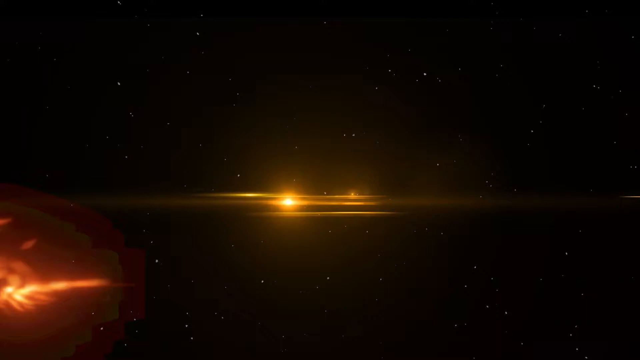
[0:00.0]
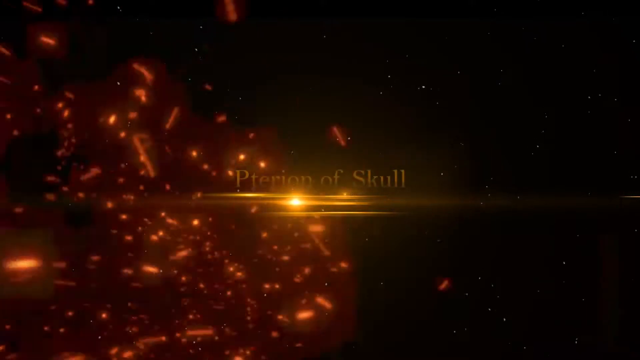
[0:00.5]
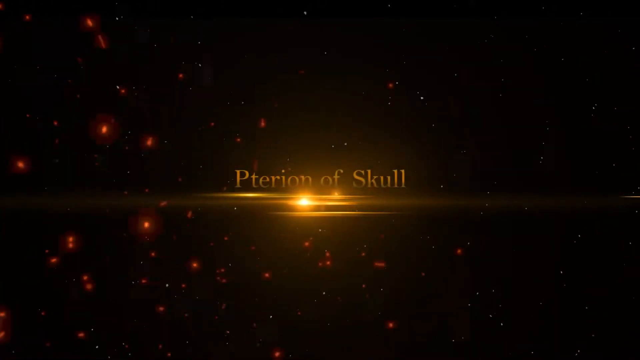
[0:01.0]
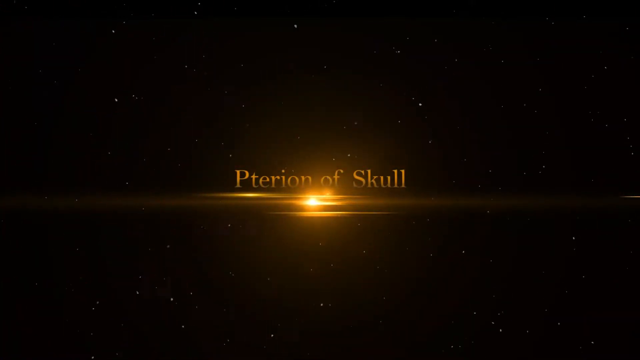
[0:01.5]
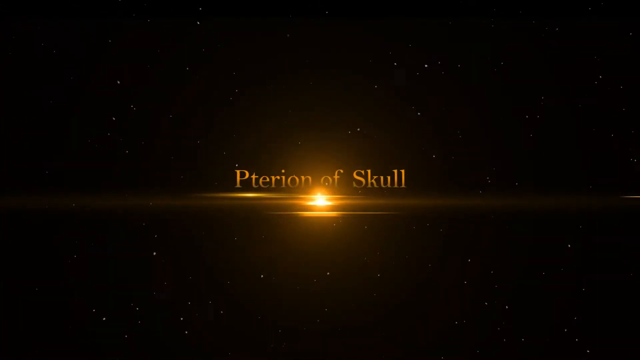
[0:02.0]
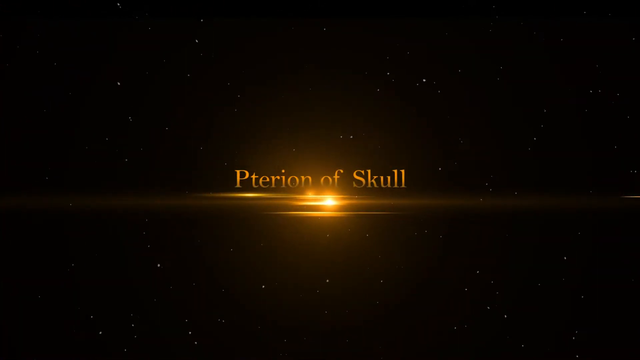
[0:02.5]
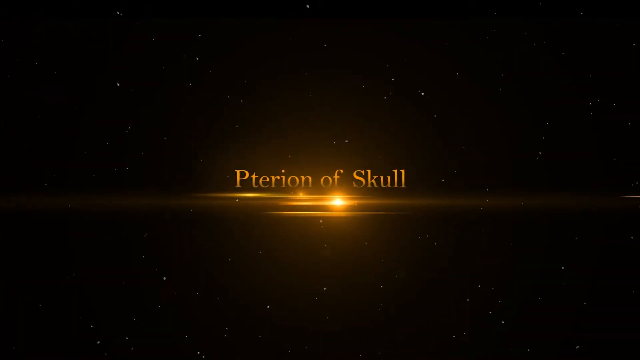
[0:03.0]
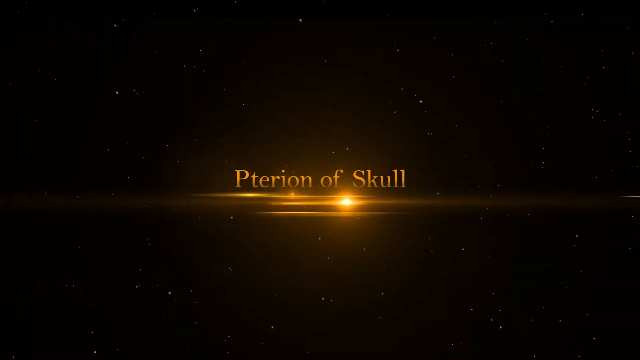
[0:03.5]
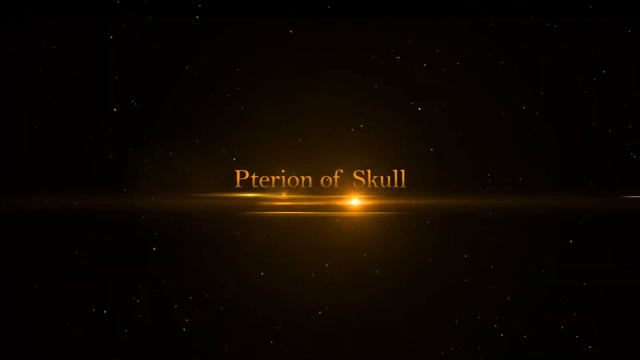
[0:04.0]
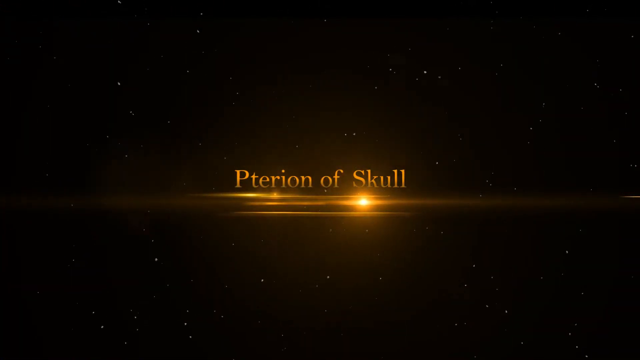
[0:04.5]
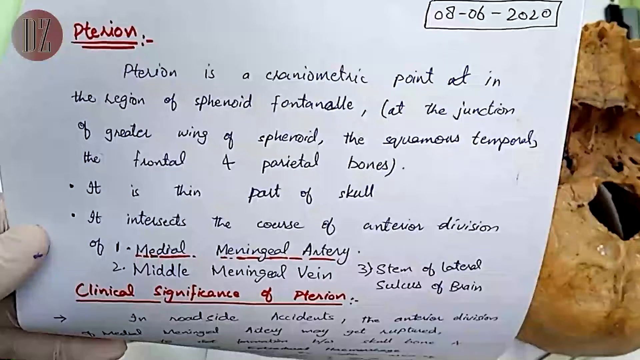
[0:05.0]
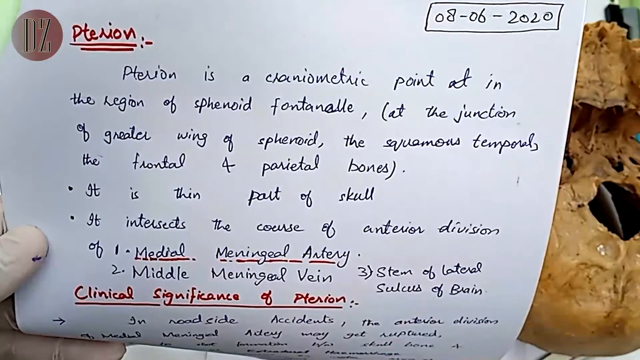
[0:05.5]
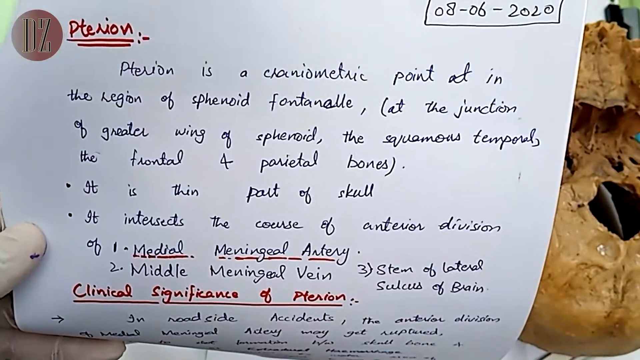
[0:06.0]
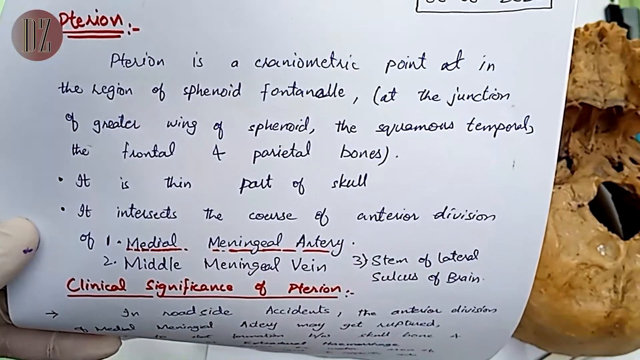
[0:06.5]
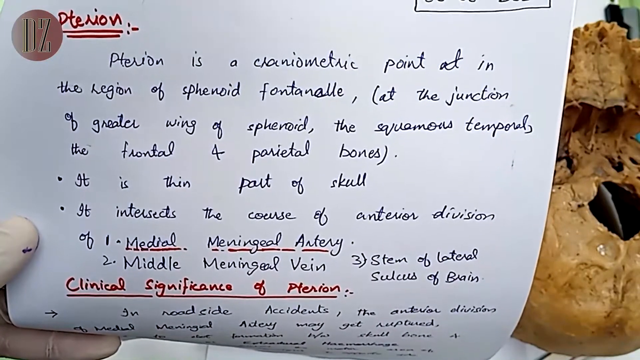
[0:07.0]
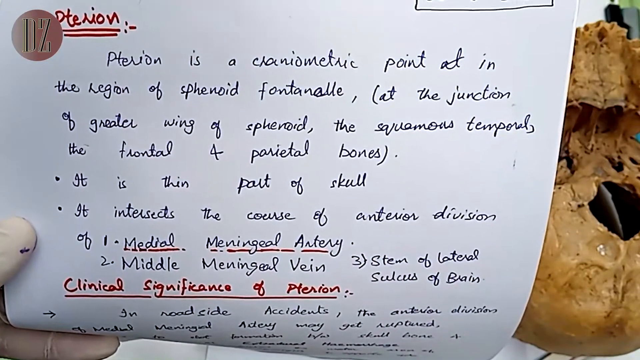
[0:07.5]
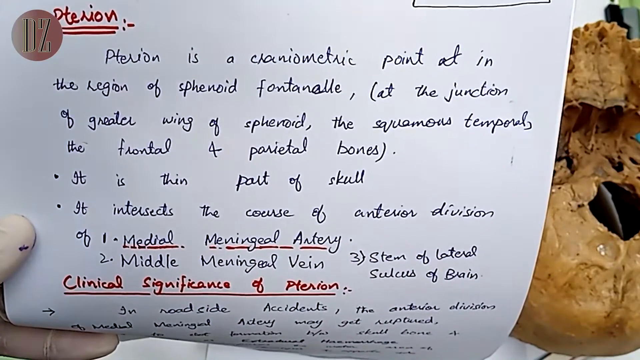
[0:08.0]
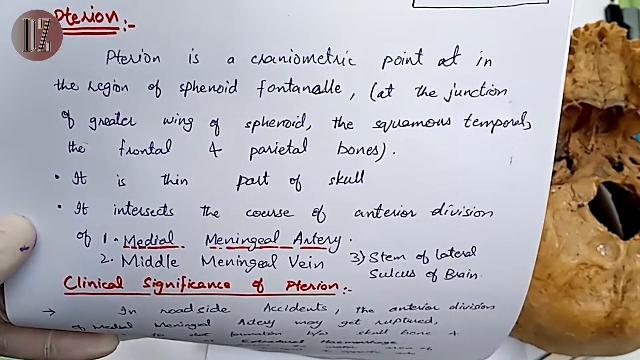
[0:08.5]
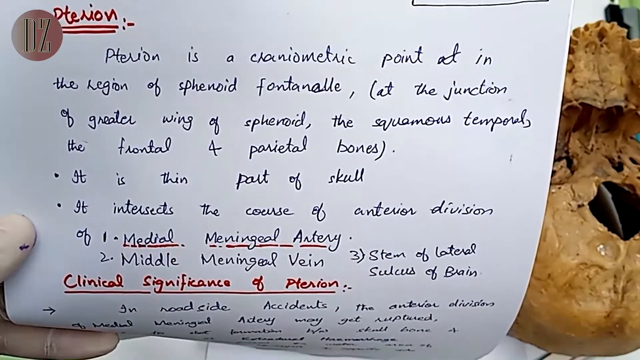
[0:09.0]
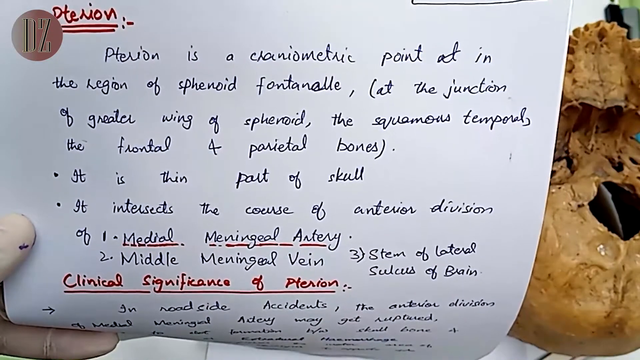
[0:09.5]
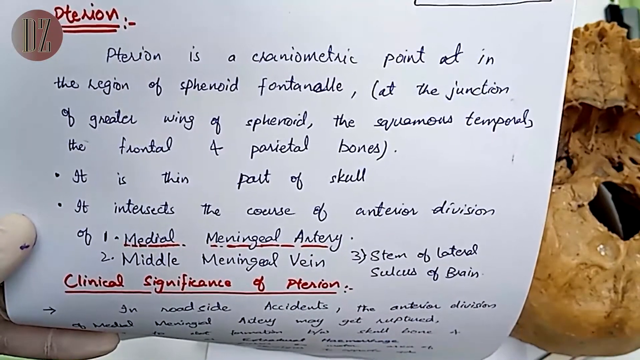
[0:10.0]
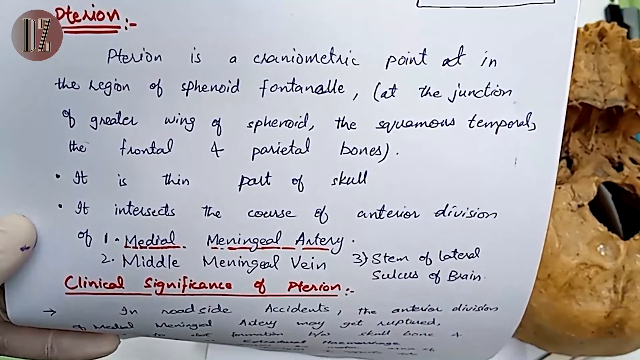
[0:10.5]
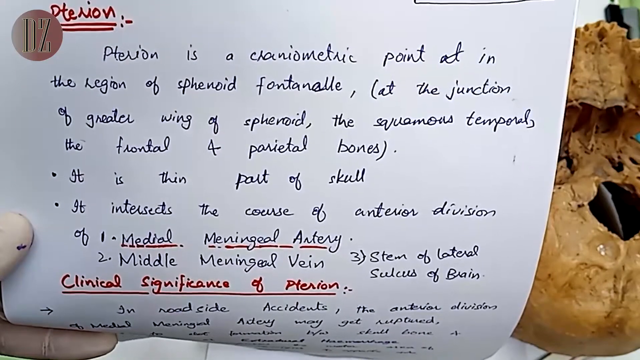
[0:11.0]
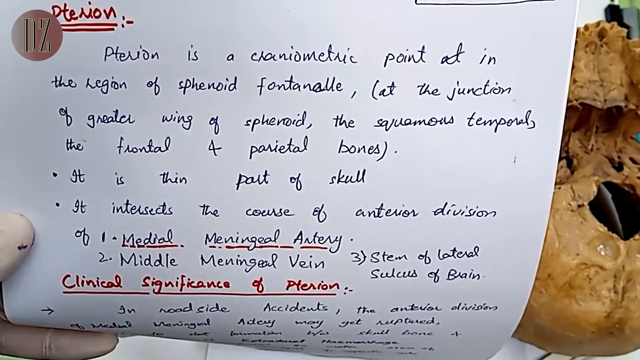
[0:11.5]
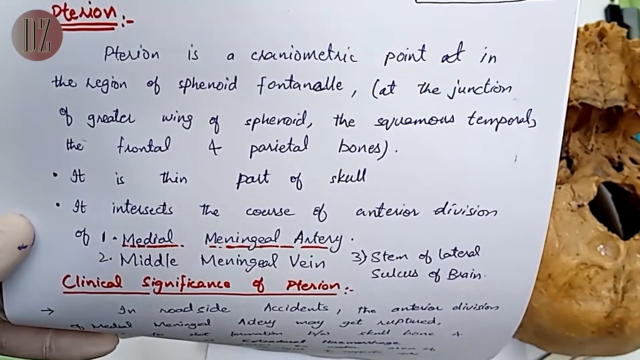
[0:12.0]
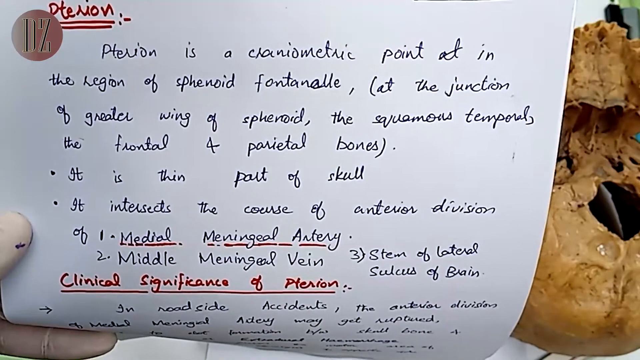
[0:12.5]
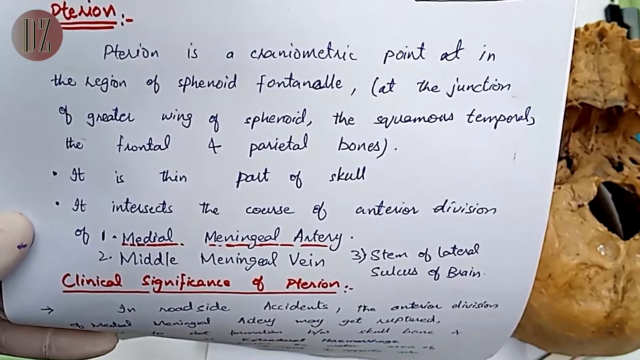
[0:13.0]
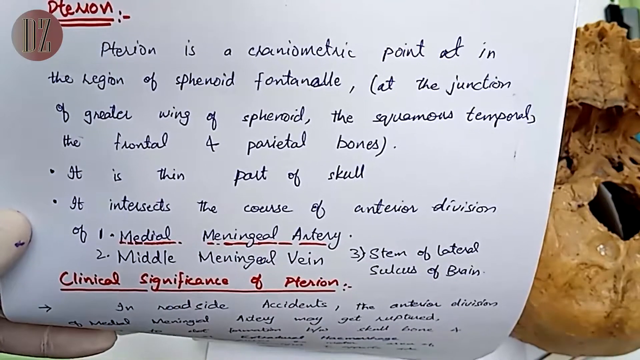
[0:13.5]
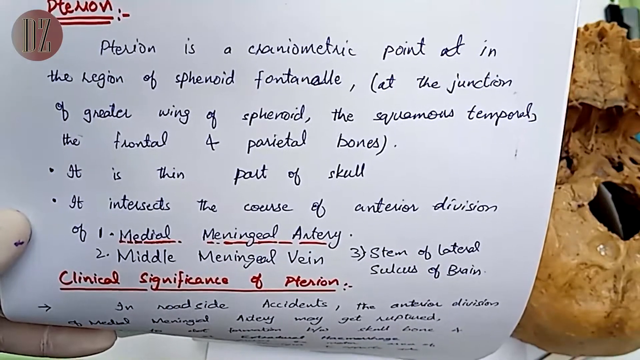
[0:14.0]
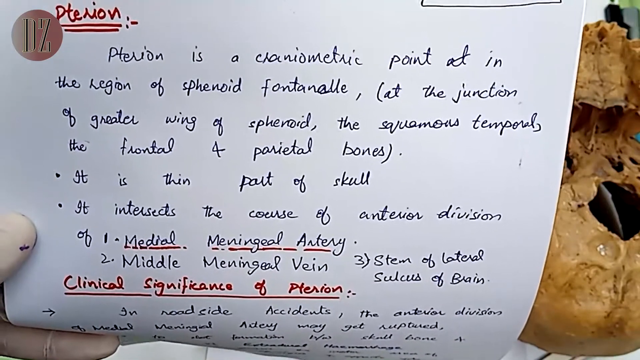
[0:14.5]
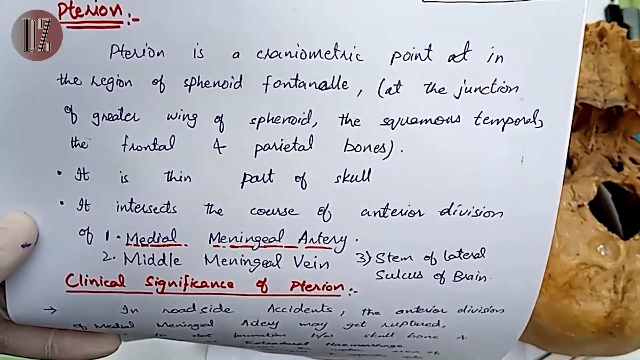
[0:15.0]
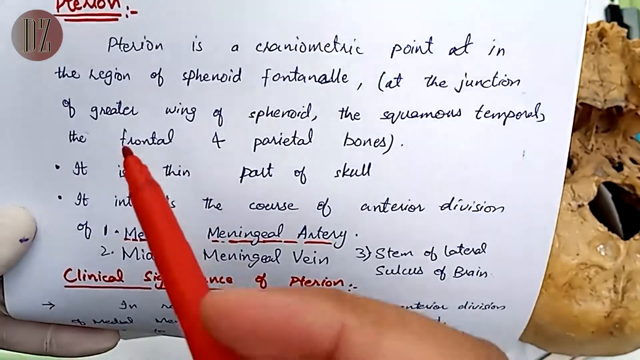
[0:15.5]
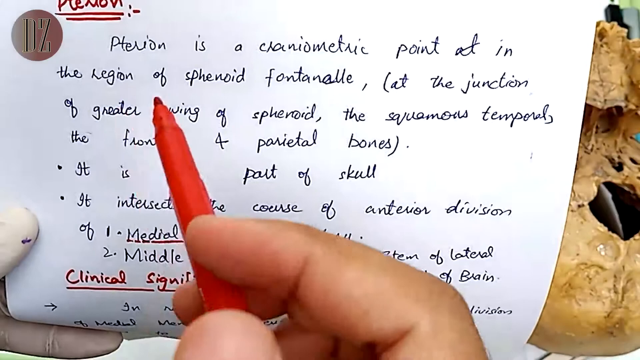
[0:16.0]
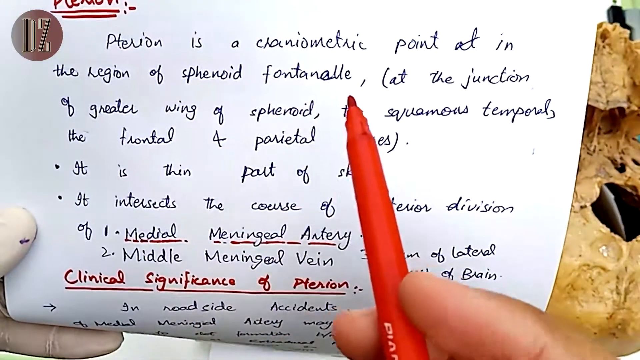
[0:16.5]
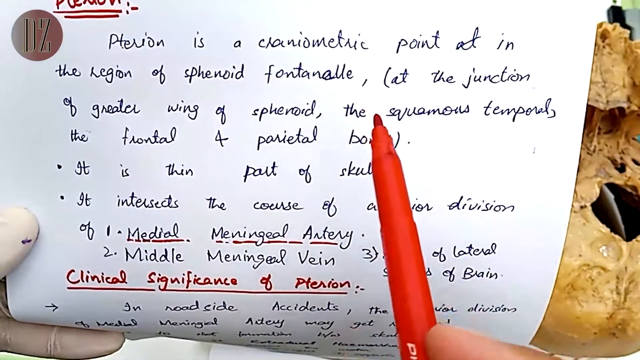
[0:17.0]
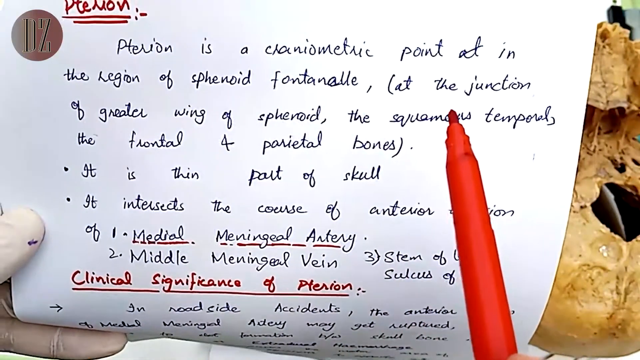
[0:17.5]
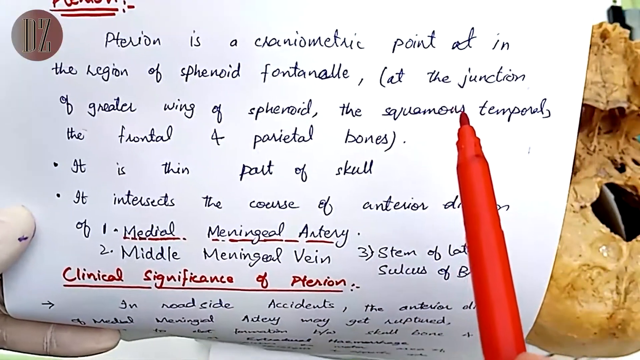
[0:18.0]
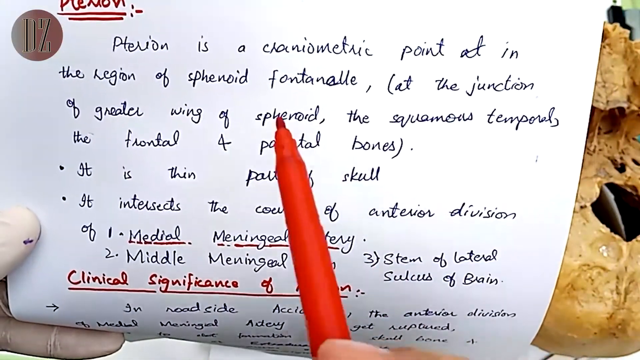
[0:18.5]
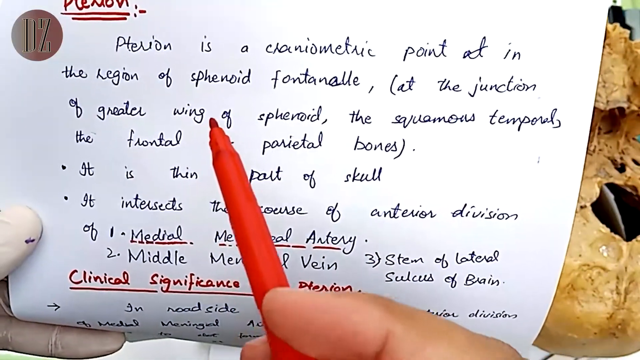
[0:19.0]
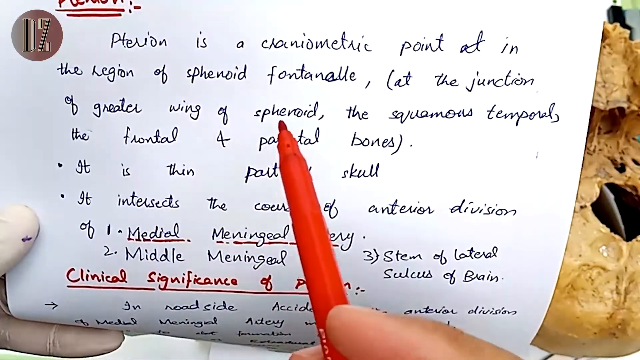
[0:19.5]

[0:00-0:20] The video begins in outer space, in inky blackness, with what appears to be a horizon in the middle and an amber orb there; it could also possibly be celestial objects shooting across space. There are small amber-colored objects, apparently stars, close by, and traditional stars in the distance. Three words then appear in the middle, above the amber orb: "Pterion of Skull". The video transitions to a close-up of someone's left hand, which appears to wear a surgical glove; only the thumb is visible. The hand holds up a piece of paper with handwritten text and a couple of bullet points. The writing is in cursive, in black ink, and fairly small. There is also some red marker writing, and some words are underlined: three words and part of a term. "Clinical significance of pterion" is written in red and underlined in red. A red marker appears in the frame and sort of glances across the page; it is in someone's hand, but the hand cannot be seen.